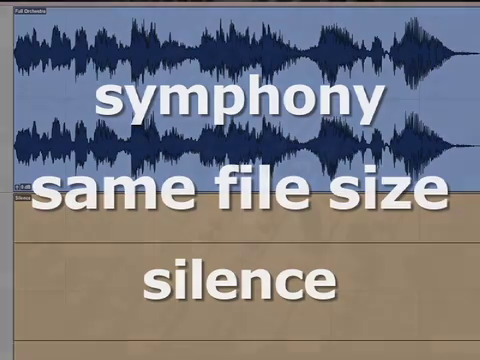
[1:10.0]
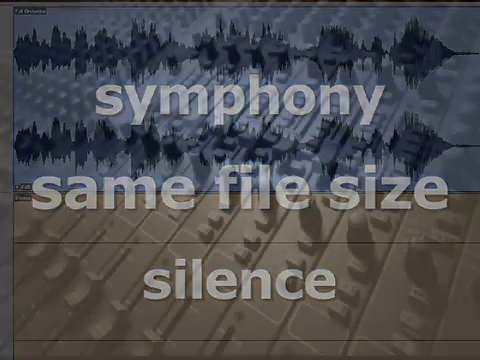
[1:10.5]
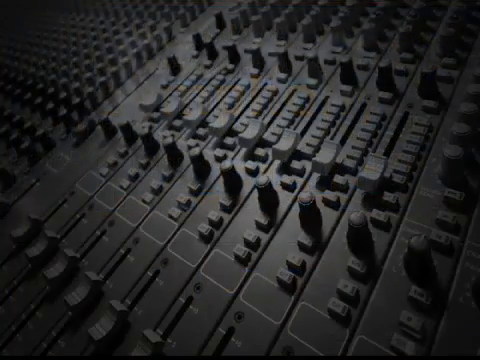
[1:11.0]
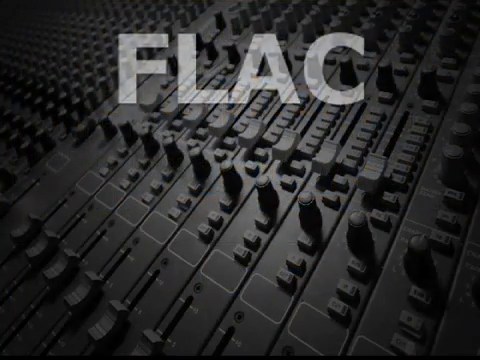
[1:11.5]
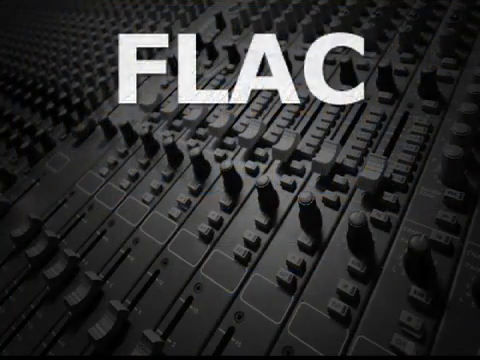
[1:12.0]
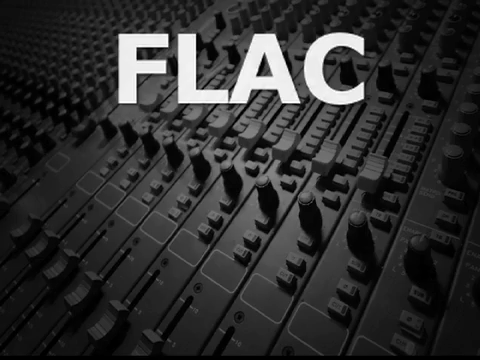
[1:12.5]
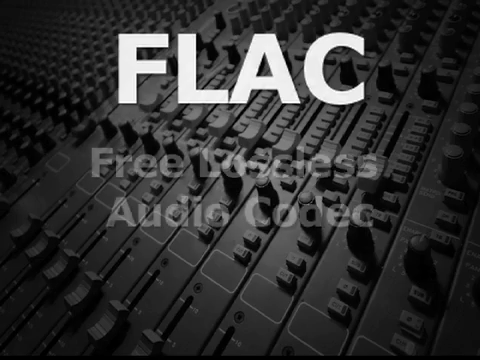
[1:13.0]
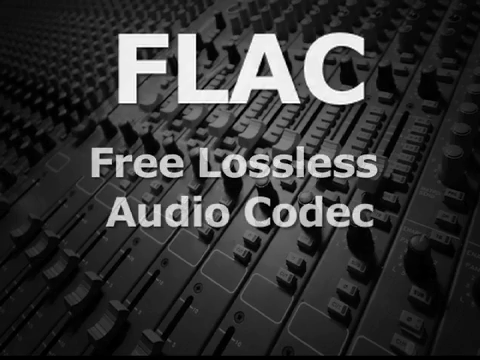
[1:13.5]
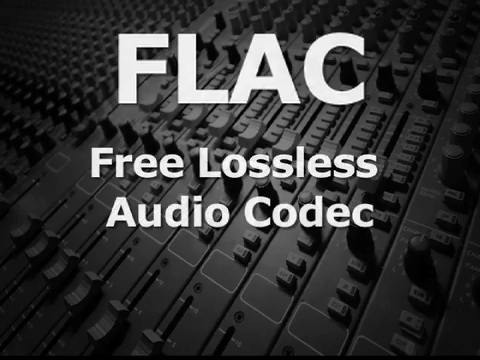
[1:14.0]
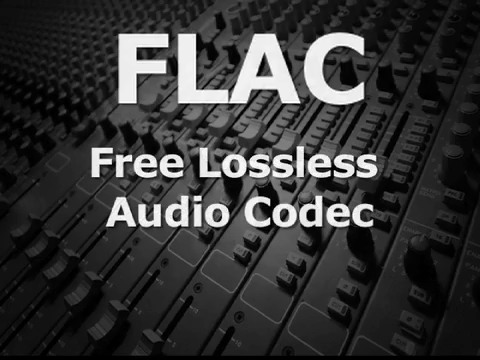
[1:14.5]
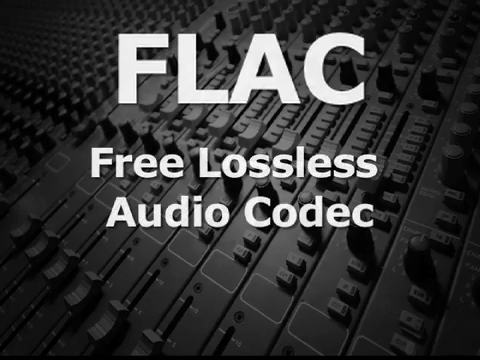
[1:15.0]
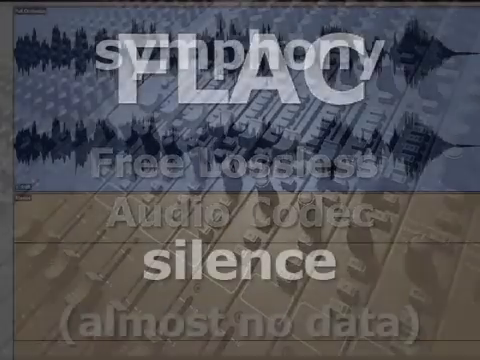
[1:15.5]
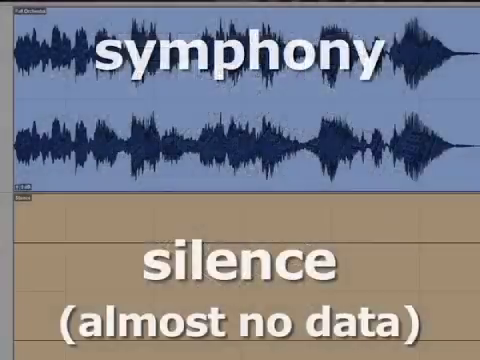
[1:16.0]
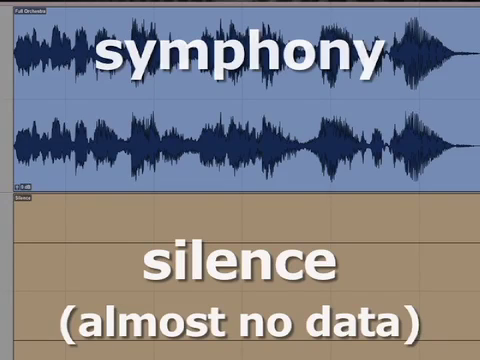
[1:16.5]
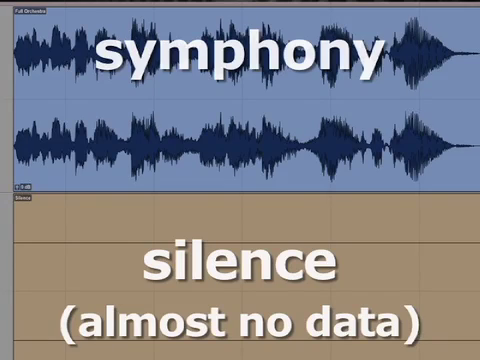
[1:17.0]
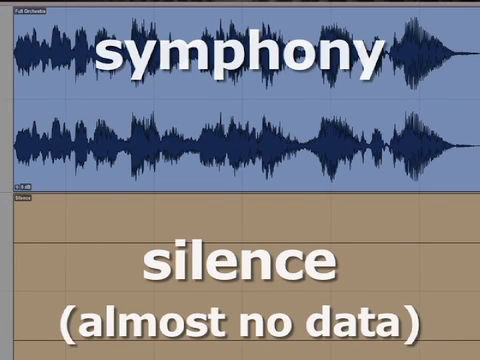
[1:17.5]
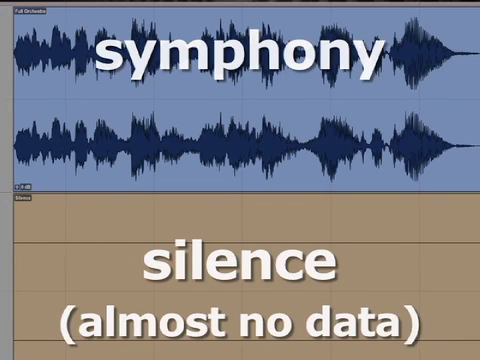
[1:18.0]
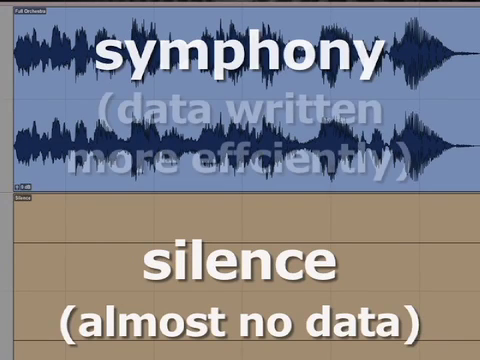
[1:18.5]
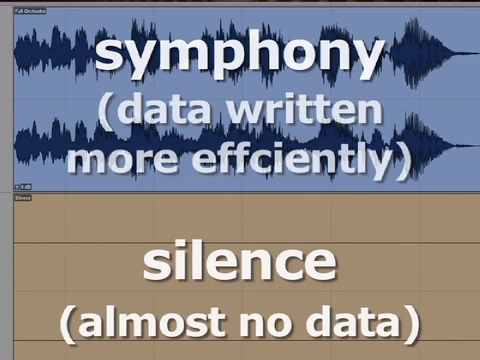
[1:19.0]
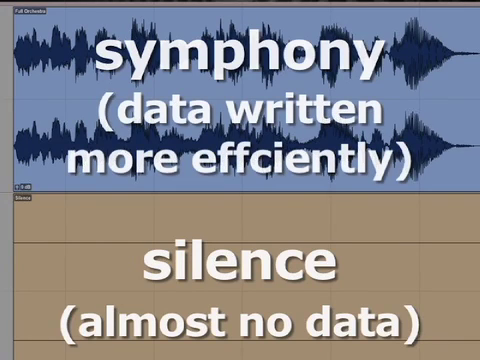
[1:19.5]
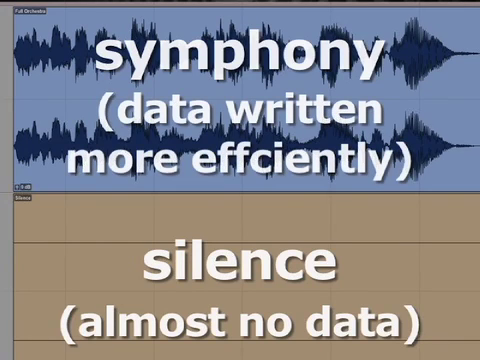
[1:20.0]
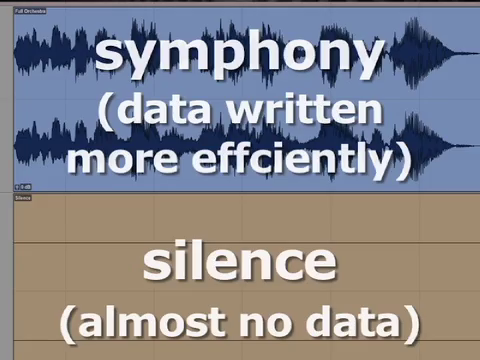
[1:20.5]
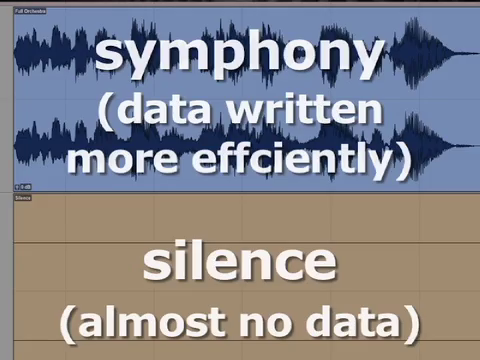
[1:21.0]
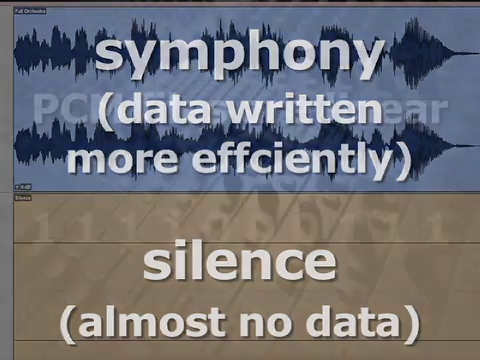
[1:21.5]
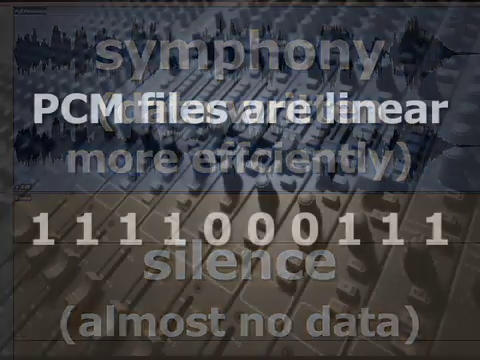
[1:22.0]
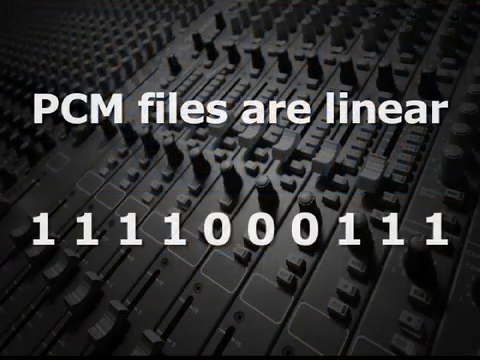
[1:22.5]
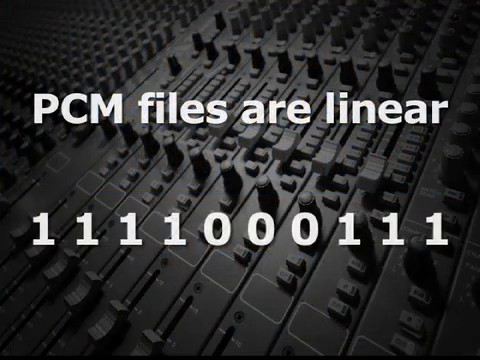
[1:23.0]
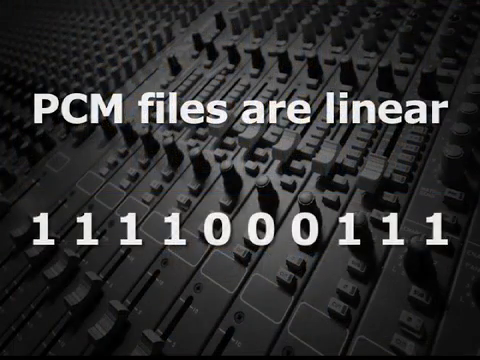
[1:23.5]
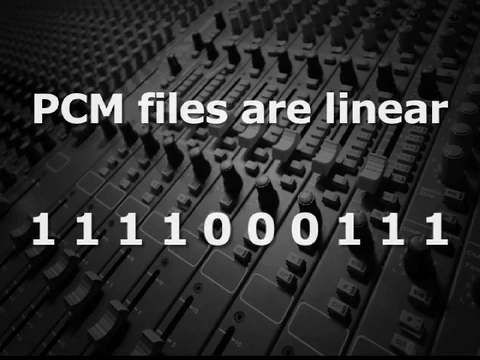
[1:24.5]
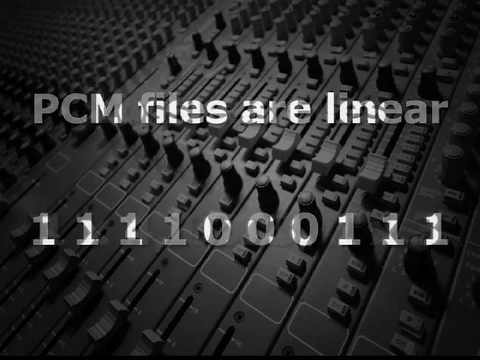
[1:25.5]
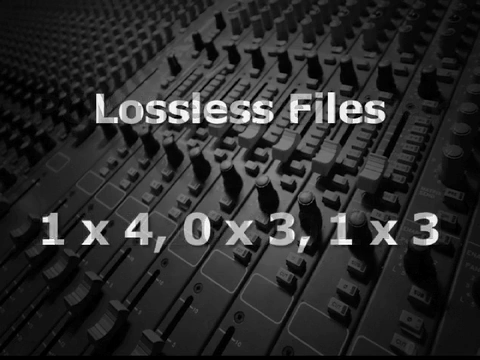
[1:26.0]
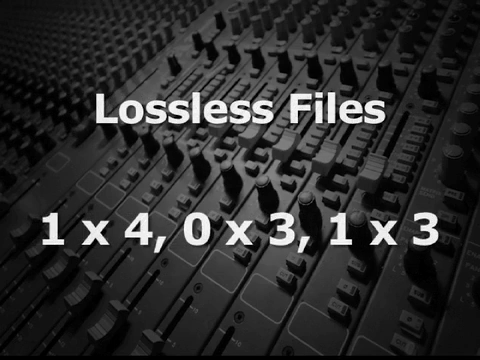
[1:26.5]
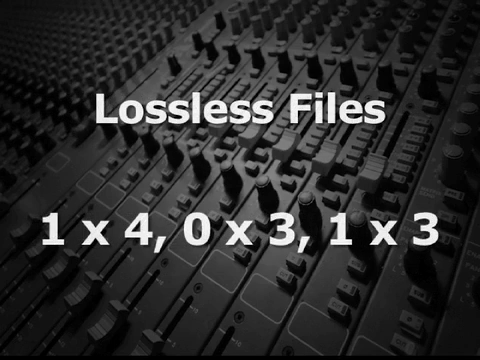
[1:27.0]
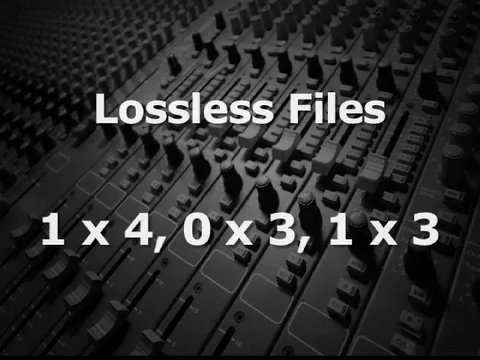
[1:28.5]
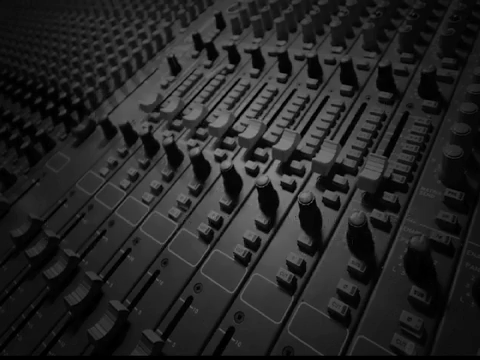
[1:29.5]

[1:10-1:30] Wording in all capital letters and white font pops up in the top part of the video: "FLAC". A still picture of an all-black synth equalizer is in the background. Underneath "FLAC", more white wording fades in: "Free Lossless Audio Codec". The video transitions to a different screen with what looks like audio sound waves in the top part, and underneath them a brown square with a line going straight across. The wording in the top part says "Symphony", and the wording in the center of the brown square at the bottom says "Silence. Almost no data."